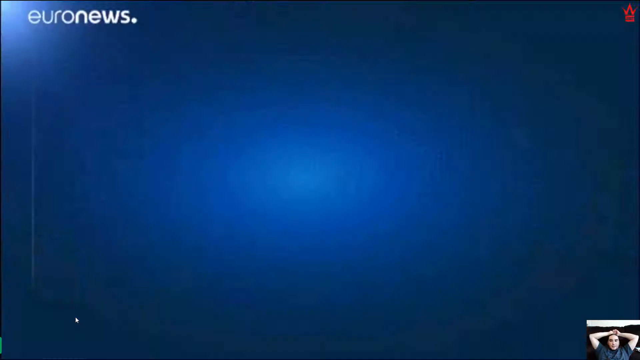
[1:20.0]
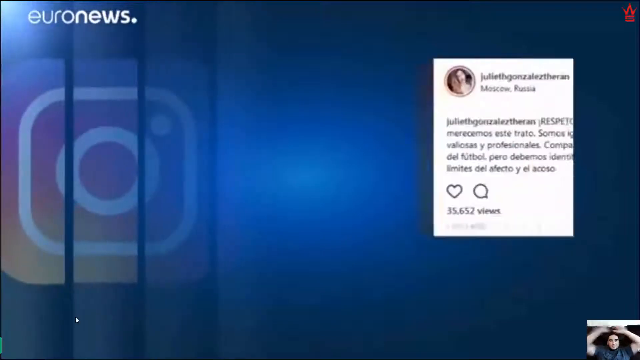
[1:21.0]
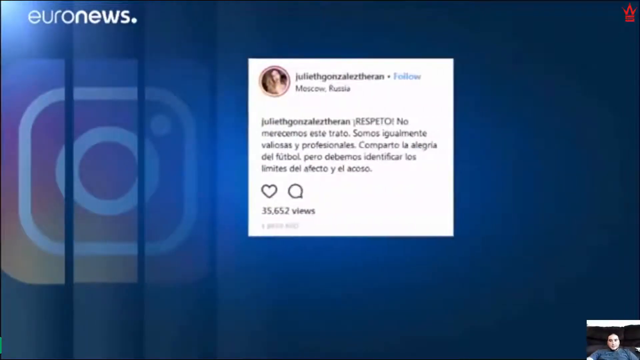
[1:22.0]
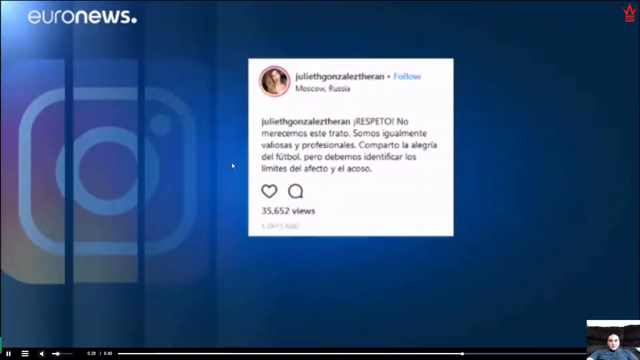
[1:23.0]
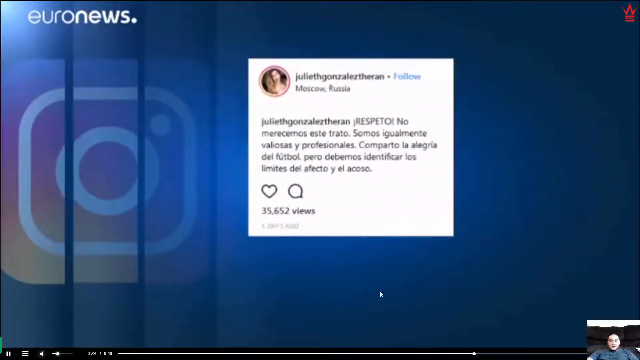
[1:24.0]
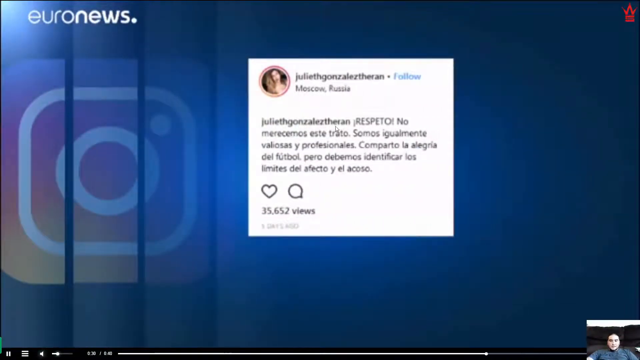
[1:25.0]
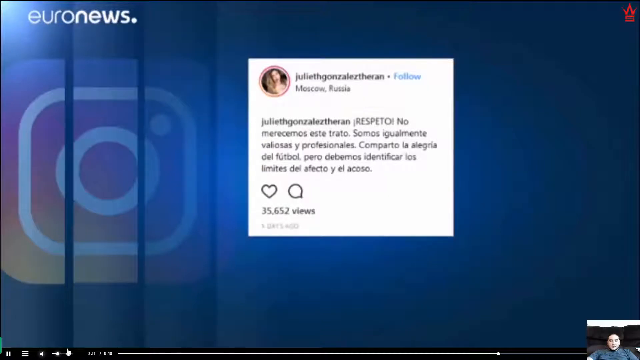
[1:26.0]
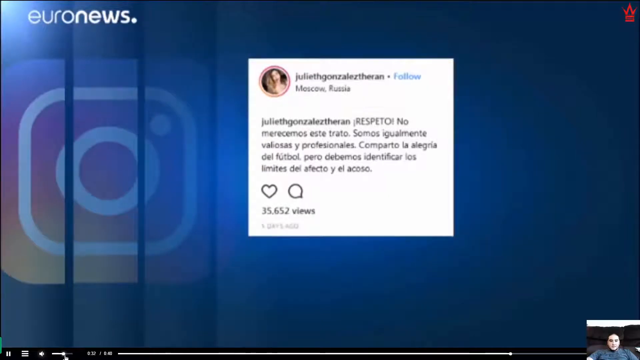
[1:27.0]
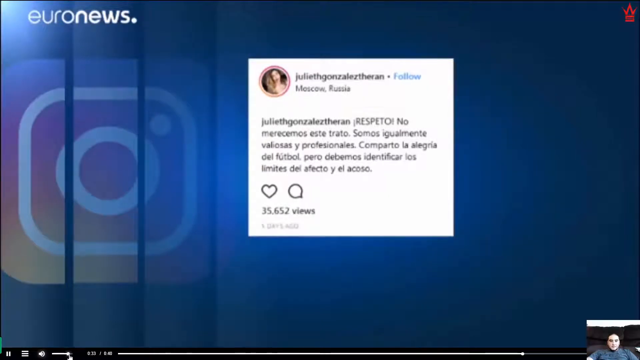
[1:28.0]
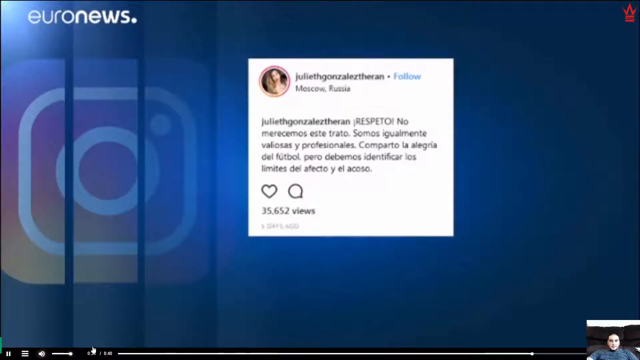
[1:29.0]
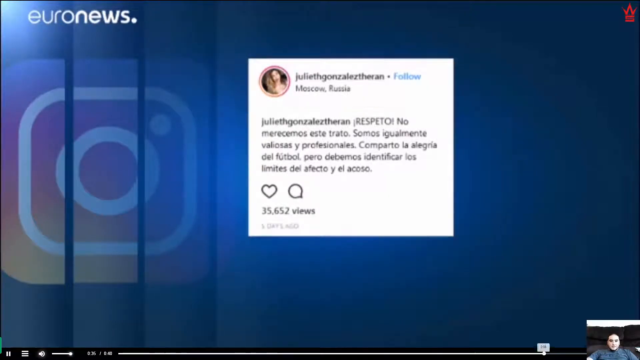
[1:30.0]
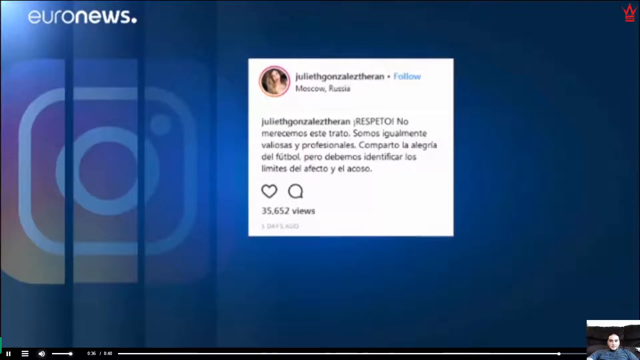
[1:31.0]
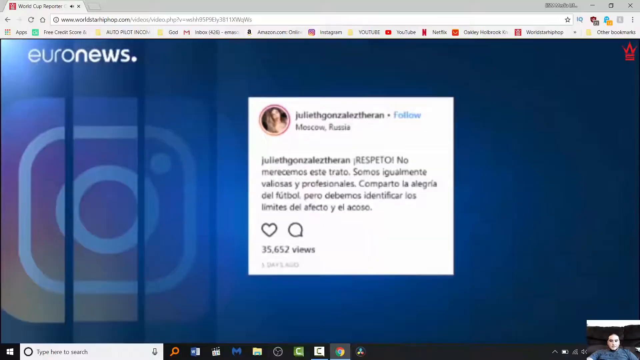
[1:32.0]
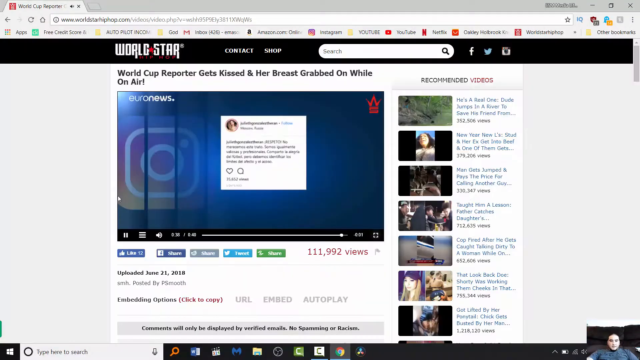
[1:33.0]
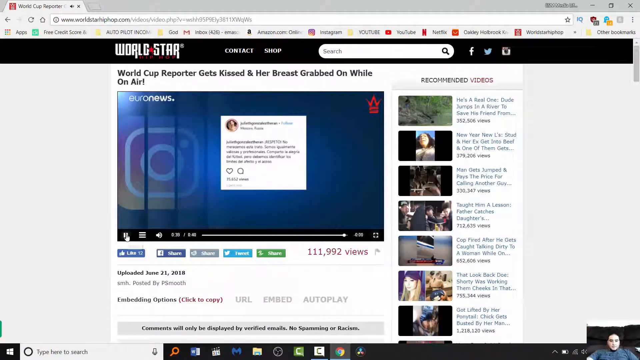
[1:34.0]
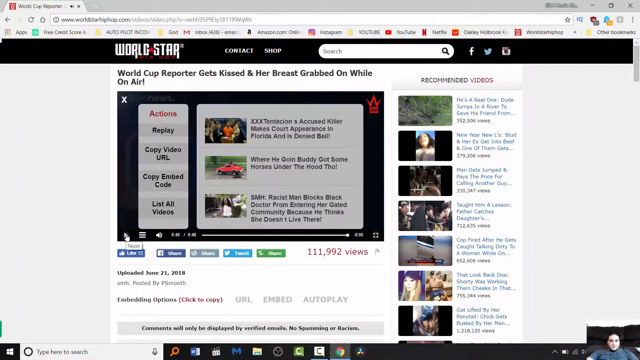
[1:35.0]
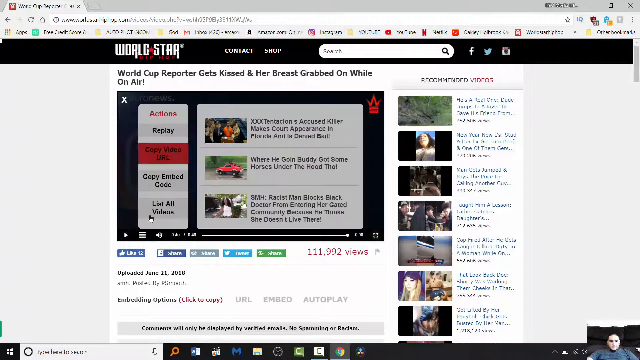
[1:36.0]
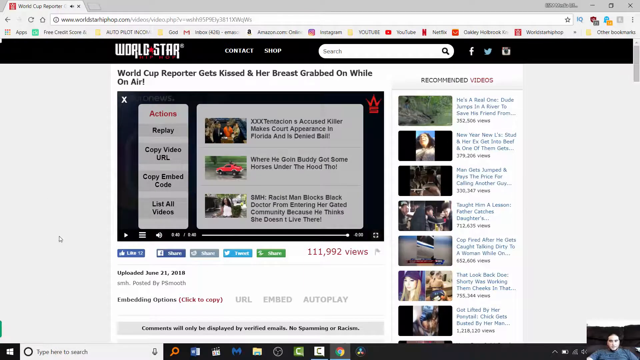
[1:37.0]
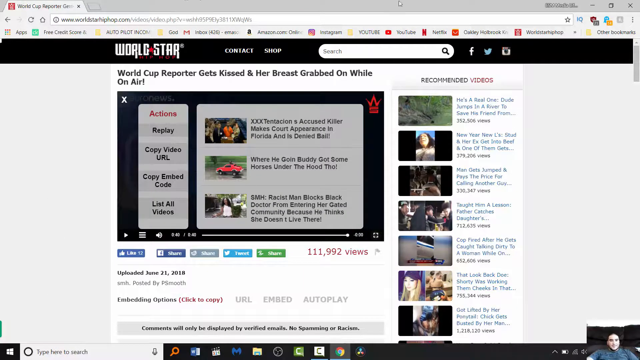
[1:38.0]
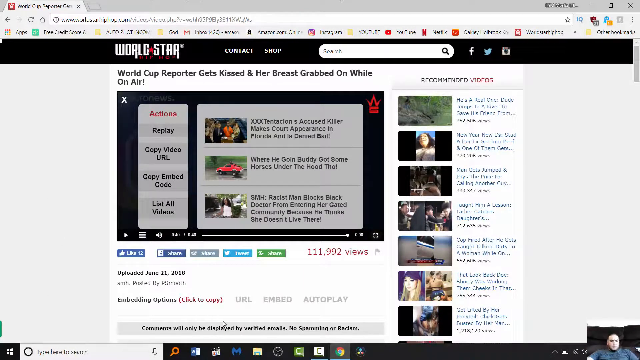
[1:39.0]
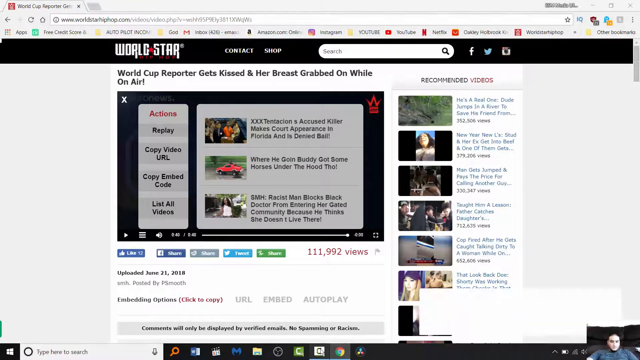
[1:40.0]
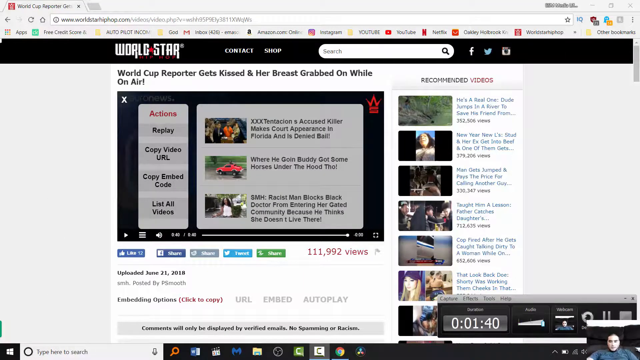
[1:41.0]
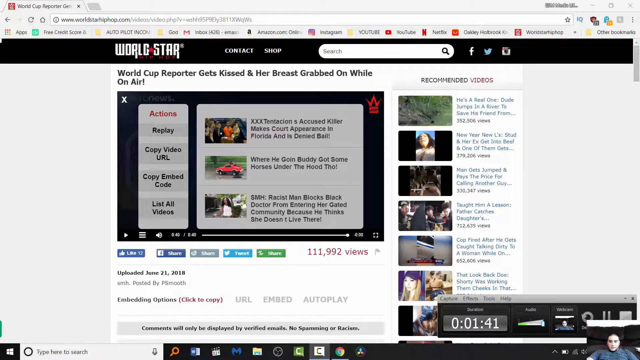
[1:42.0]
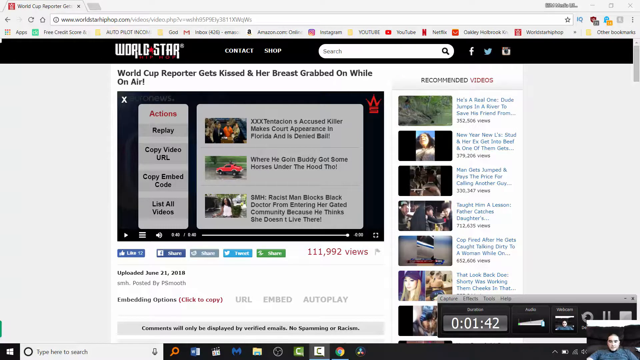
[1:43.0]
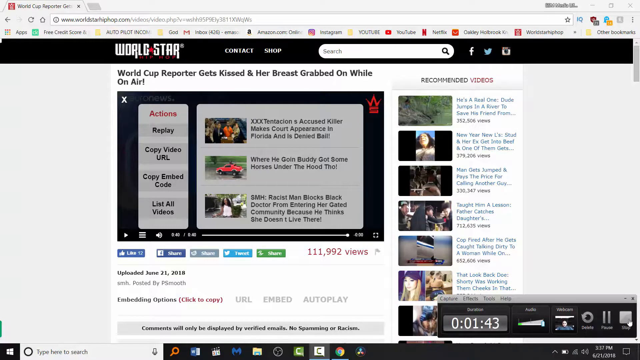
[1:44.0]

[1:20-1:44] A screenshot of an Instagram post by Julieth Gonzalez-Theran appears on screen, with an Instagram icon in the background. The post was made from Moscow, Russia, and reads 'respeto No Merecemos este trato. Somos Igualmente valiosas y profesionales. Comparto la alegría del fútbol, pero debemos Identificar Los Limites'. The post has 35,652 views and is courtesy of Euro news. The pointer hovers over the screen, then moves to the bottom left and raises the volume to the maximum using the volume button. The man sharing the screen, at the bottom right, is seated slanting backwards and looking straight at the screen. The pointer clicks the full screen button and the video leaves full screen mode. The pointer hovers over the video, then clicks the pause button at the bottom of it. The video ends and suggestions of other videos appear on screen.